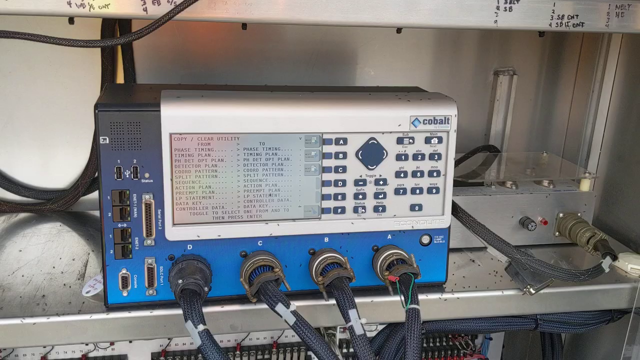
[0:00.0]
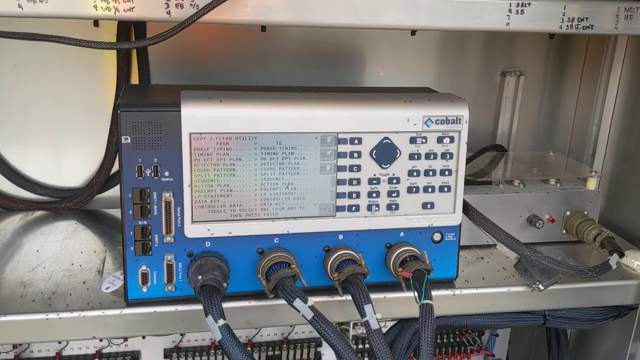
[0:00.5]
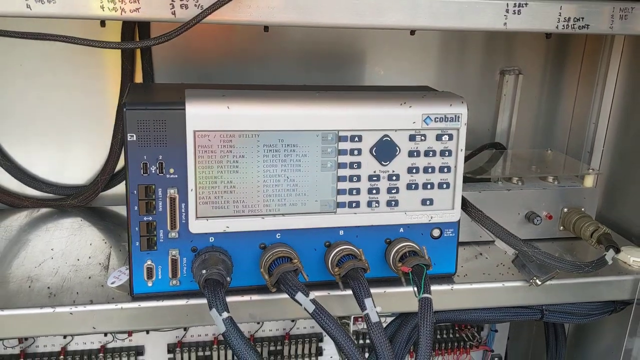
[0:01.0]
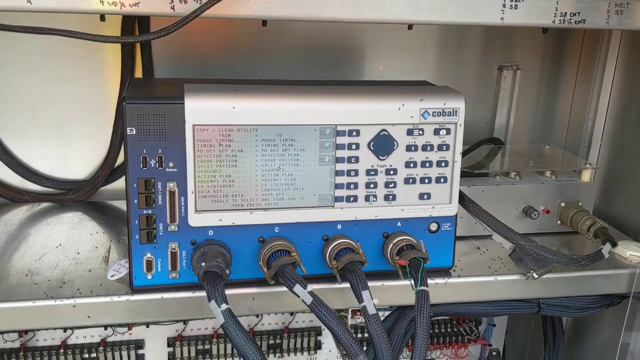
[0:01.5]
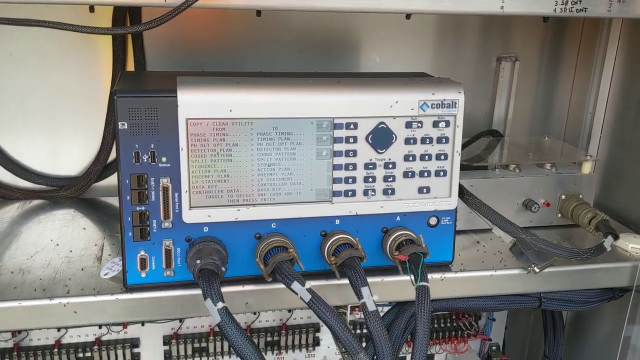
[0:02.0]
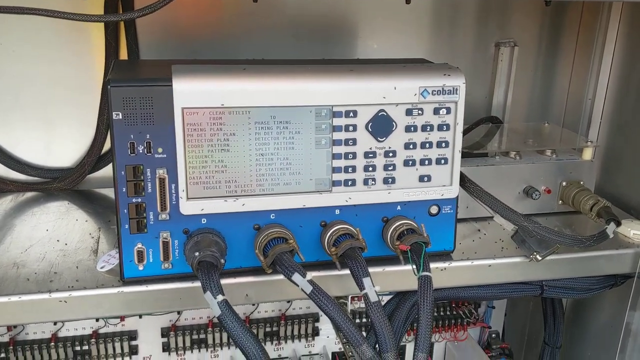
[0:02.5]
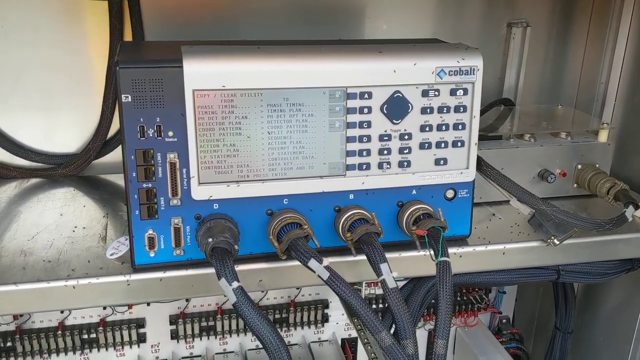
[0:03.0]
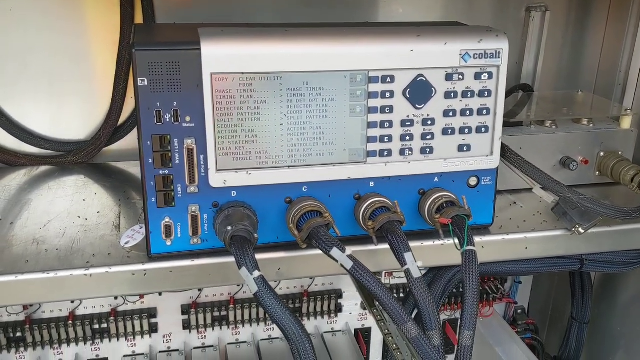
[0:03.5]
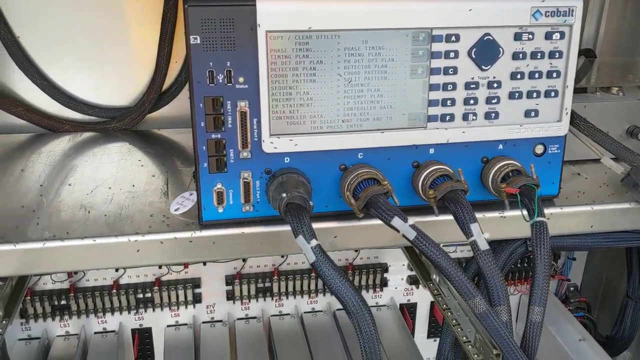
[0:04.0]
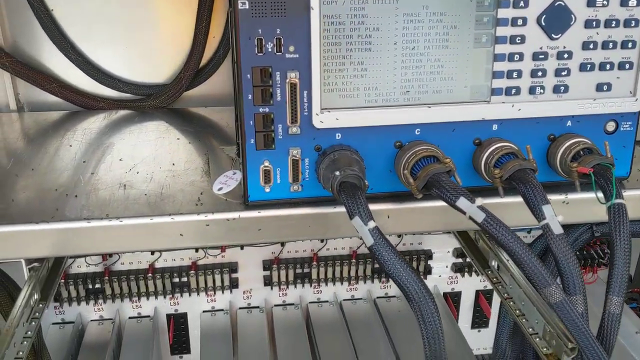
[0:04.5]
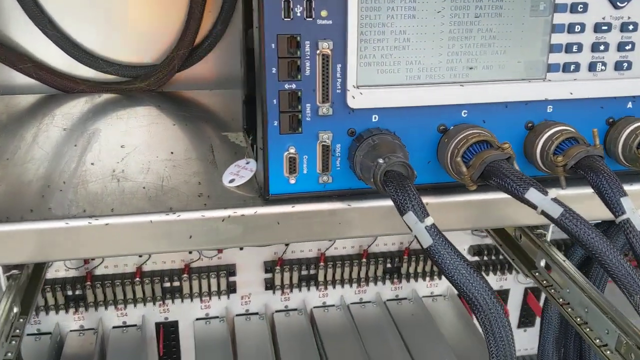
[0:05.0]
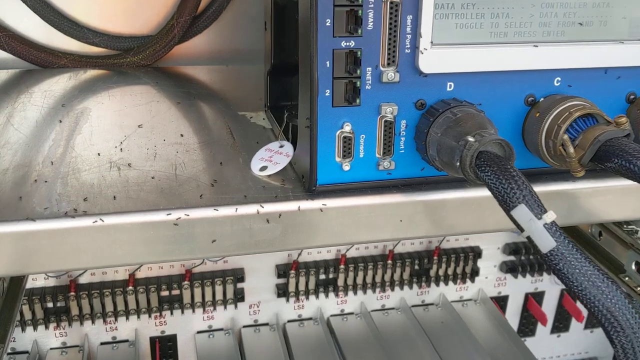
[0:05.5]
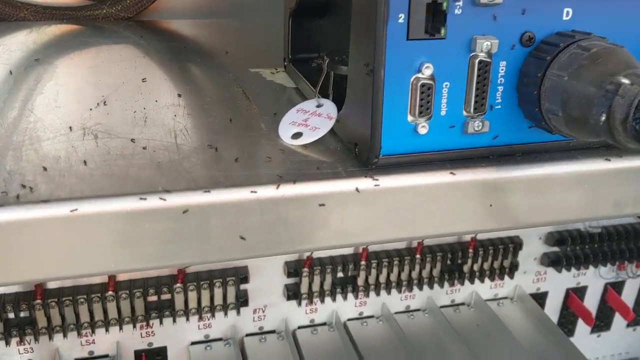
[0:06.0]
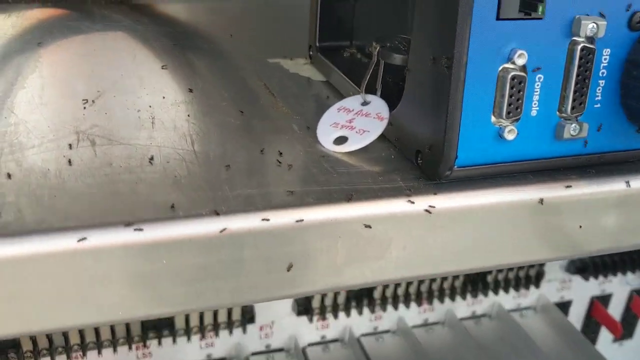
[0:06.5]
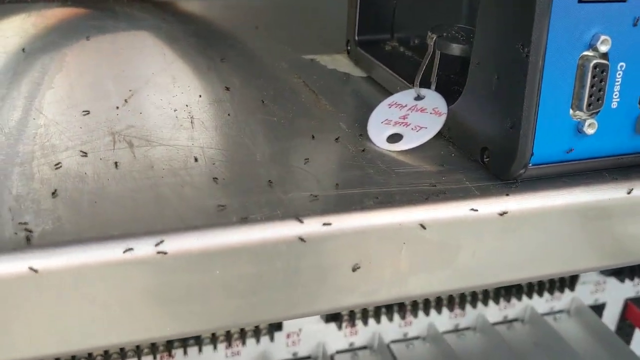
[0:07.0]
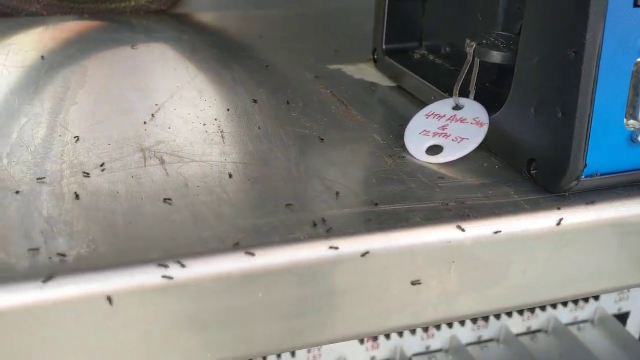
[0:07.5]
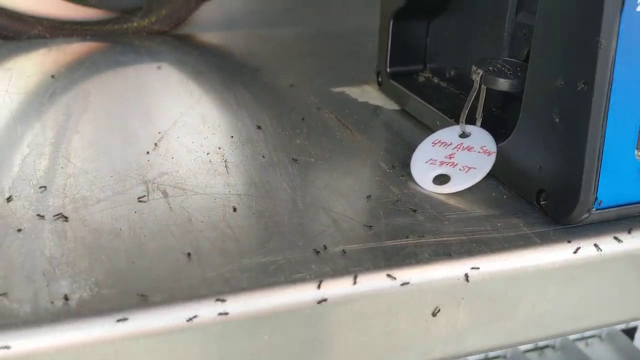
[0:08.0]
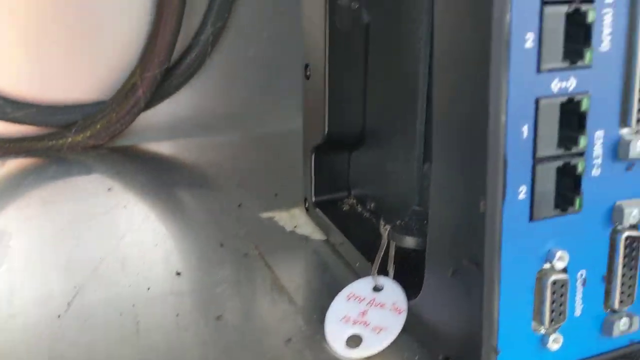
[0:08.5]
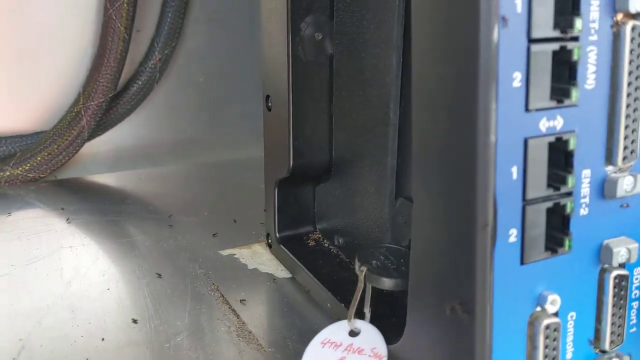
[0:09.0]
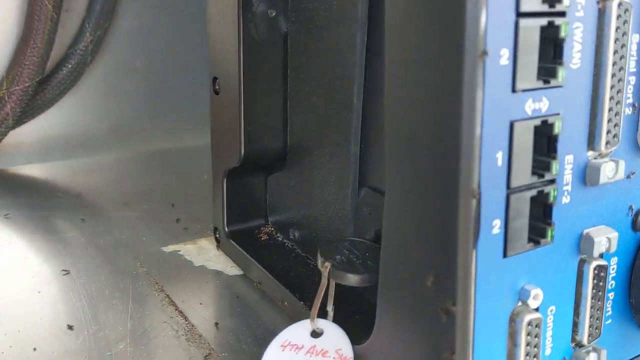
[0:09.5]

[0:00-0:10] The opening scene shows machinery, with a lot of ants moving around it. No people are visible. The machine is blue and gray, with four connecting cords attached to it and a separate cord on the side also connected to it. Many ants are moving around where the machine is situated. There are black cords, and there is some further machinery below the machine.